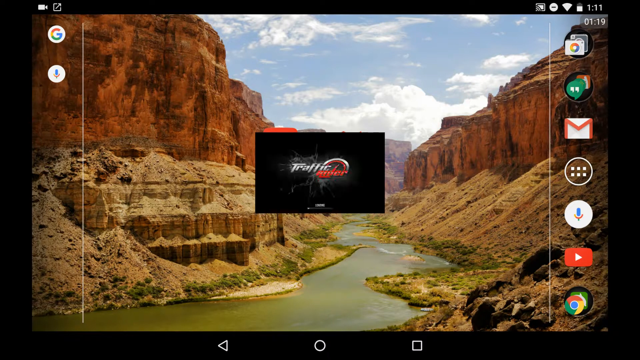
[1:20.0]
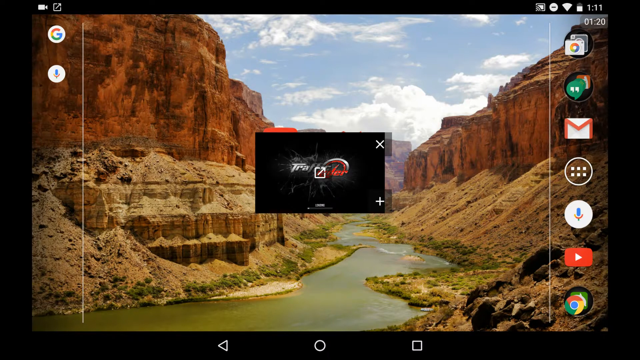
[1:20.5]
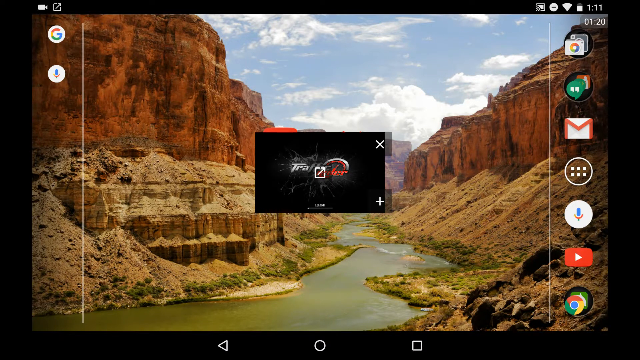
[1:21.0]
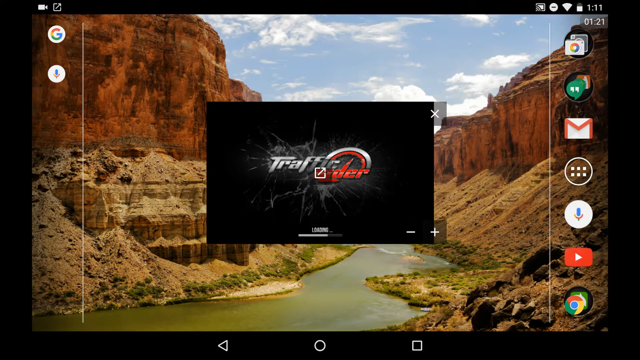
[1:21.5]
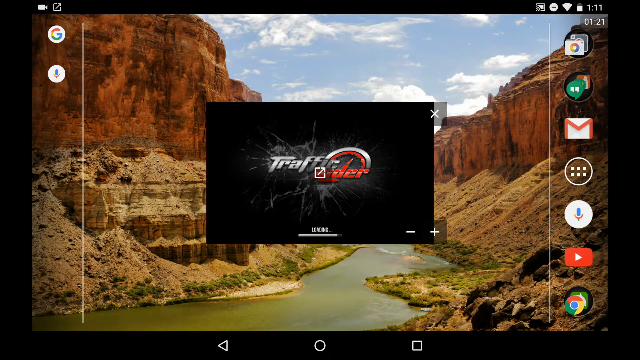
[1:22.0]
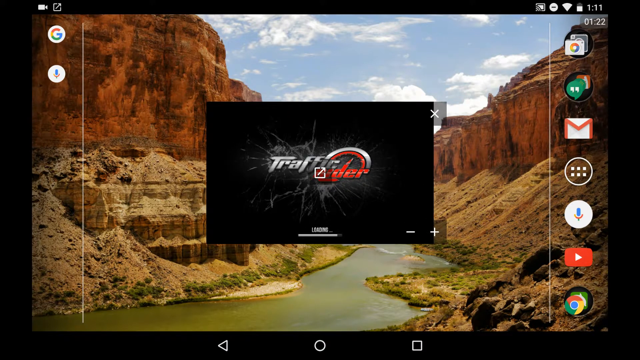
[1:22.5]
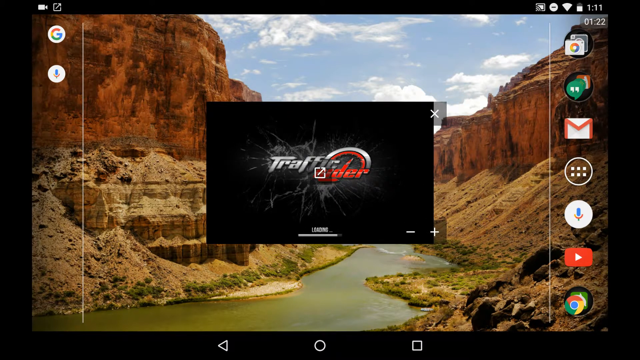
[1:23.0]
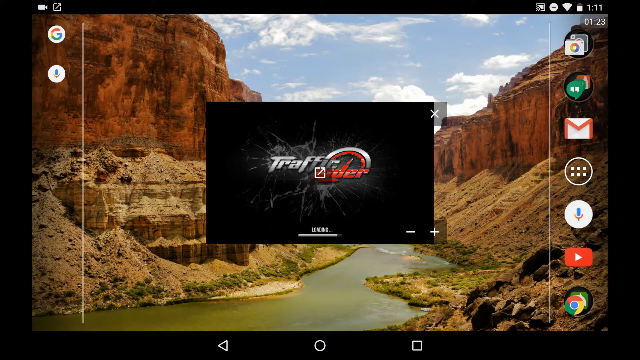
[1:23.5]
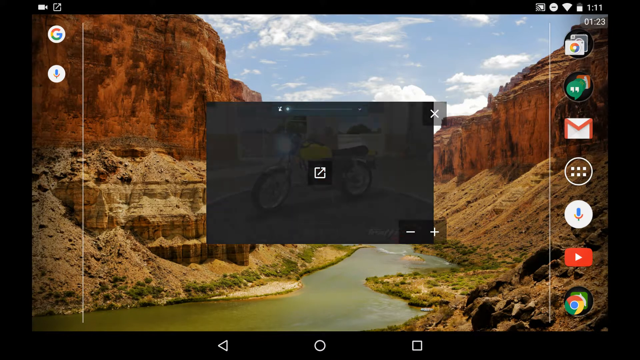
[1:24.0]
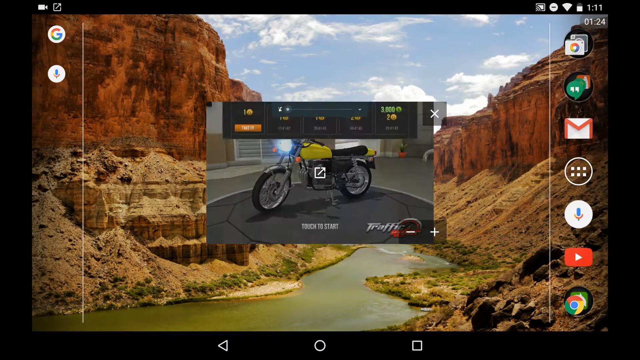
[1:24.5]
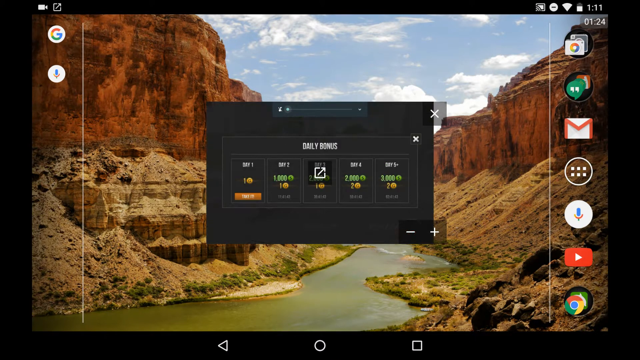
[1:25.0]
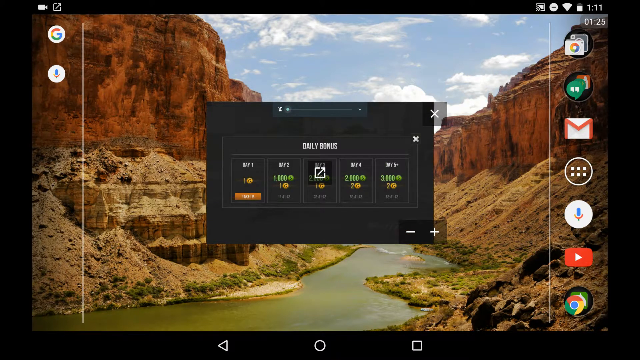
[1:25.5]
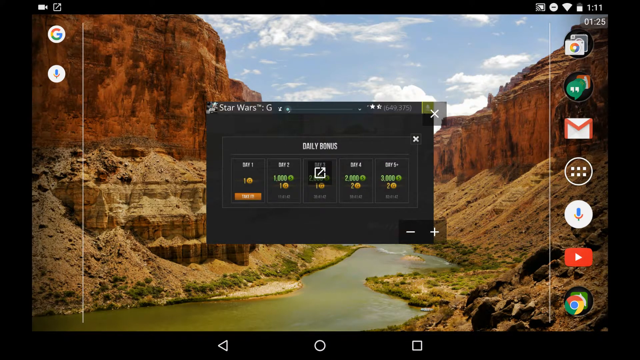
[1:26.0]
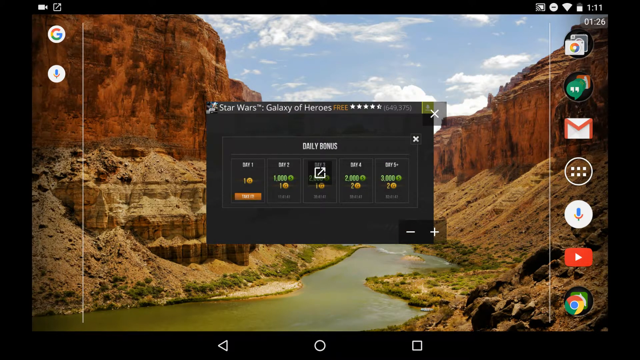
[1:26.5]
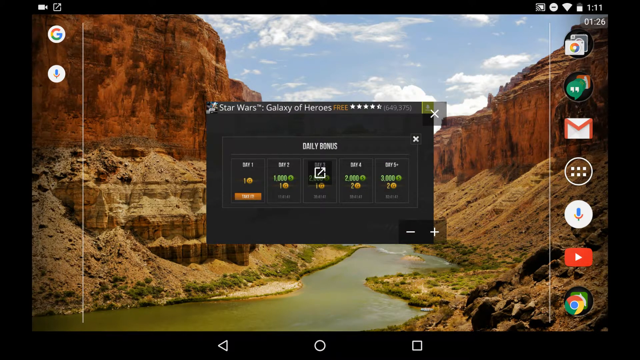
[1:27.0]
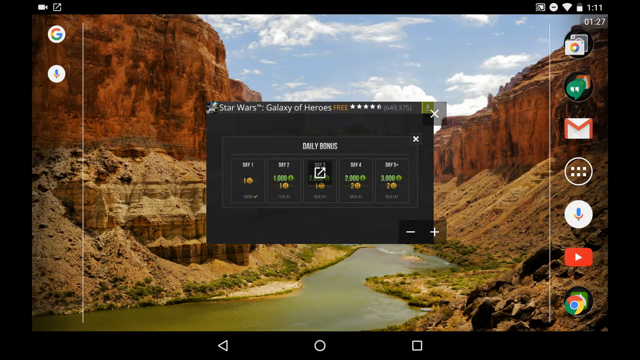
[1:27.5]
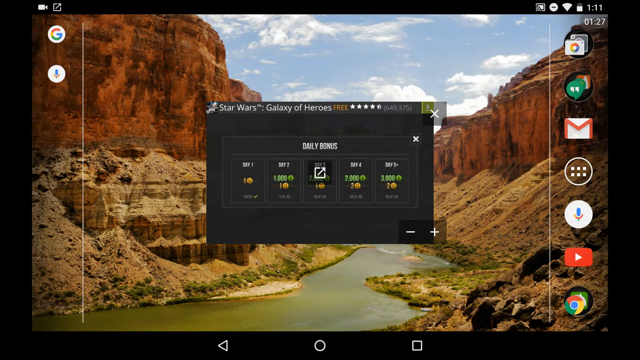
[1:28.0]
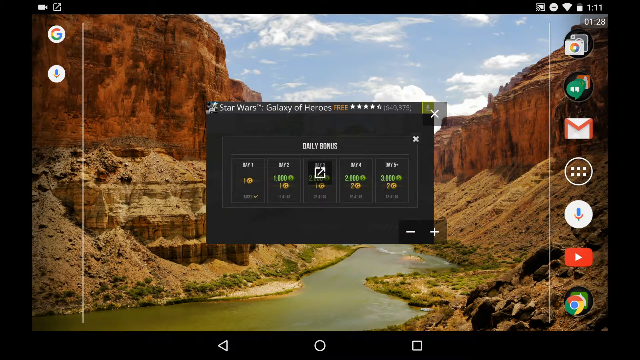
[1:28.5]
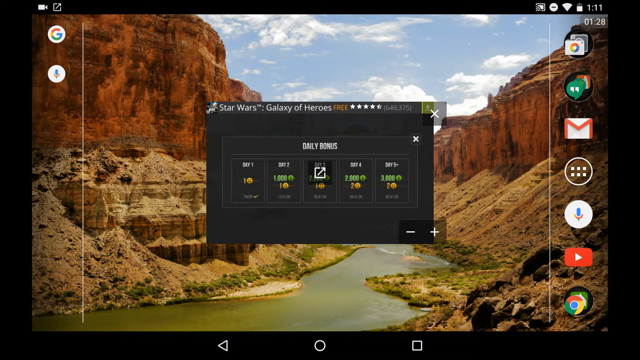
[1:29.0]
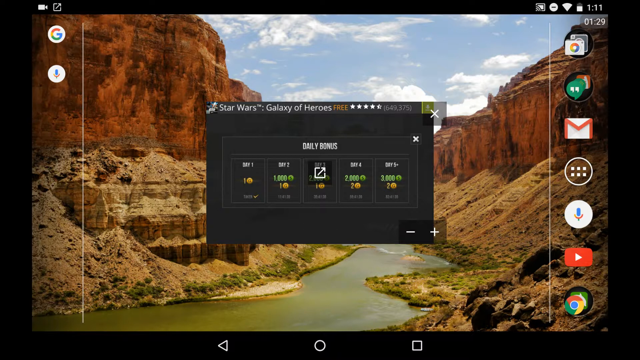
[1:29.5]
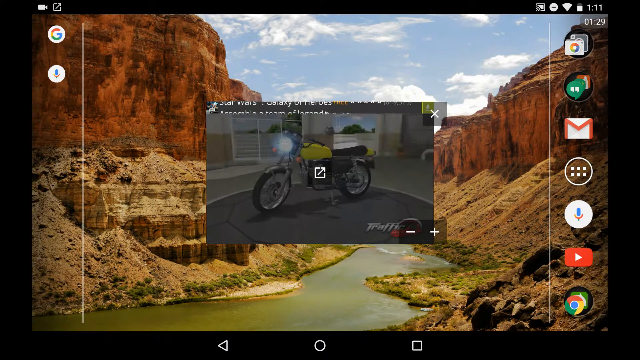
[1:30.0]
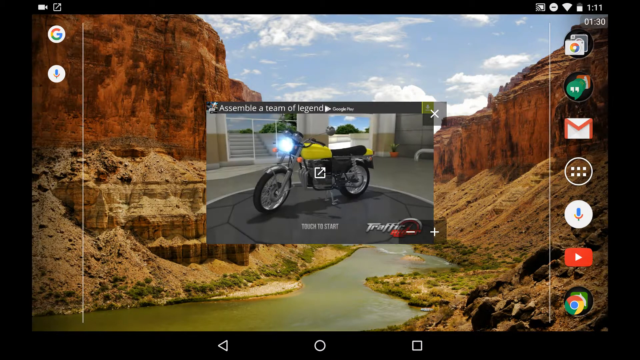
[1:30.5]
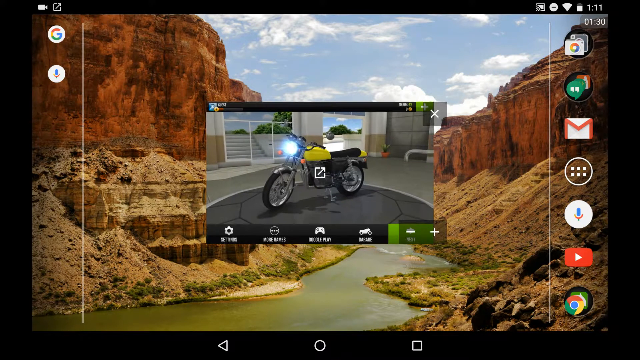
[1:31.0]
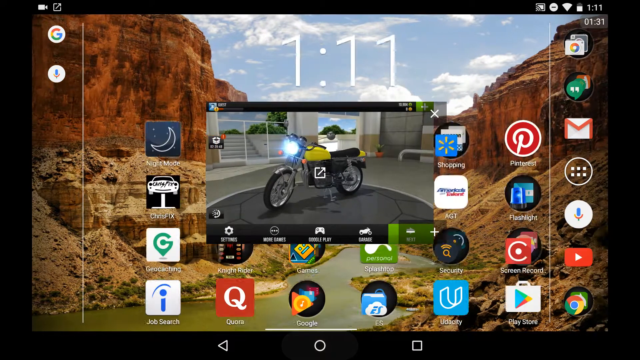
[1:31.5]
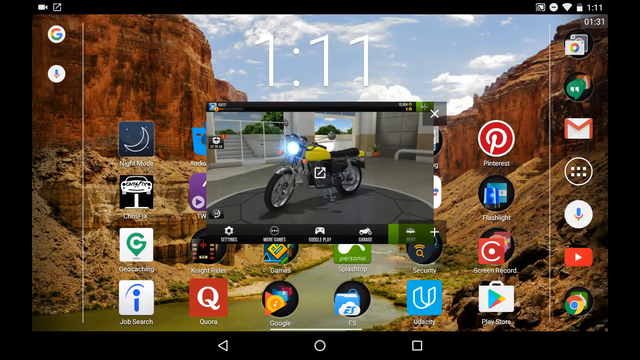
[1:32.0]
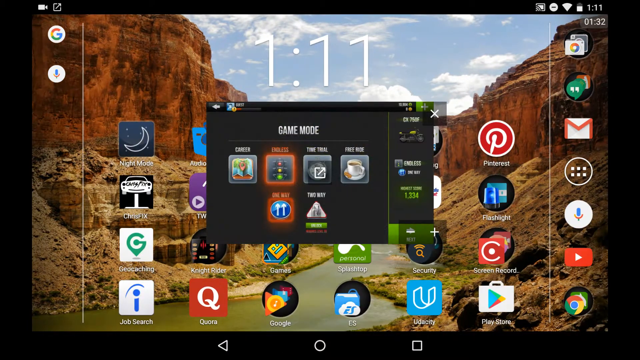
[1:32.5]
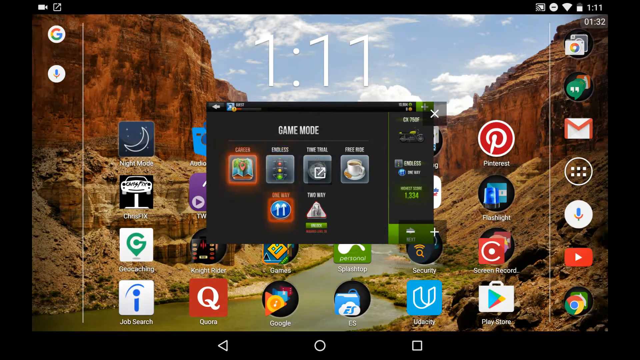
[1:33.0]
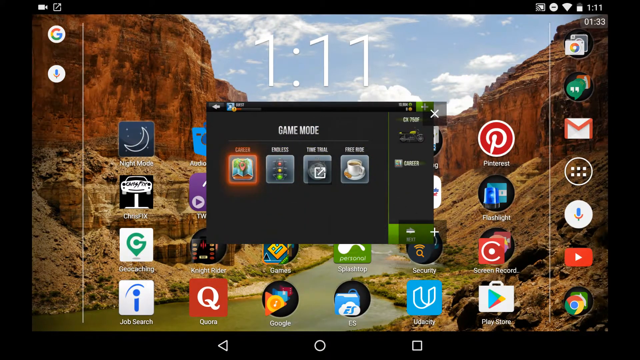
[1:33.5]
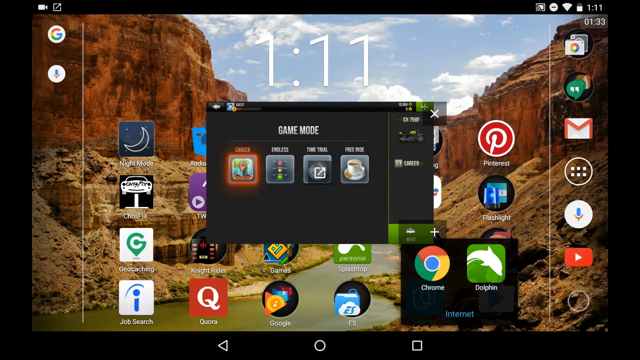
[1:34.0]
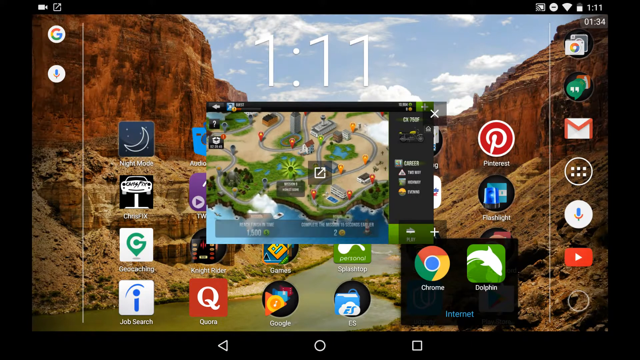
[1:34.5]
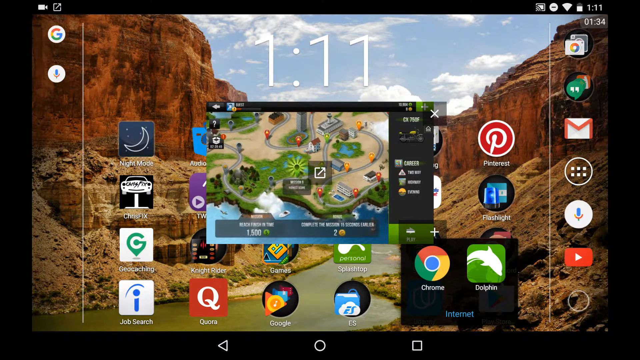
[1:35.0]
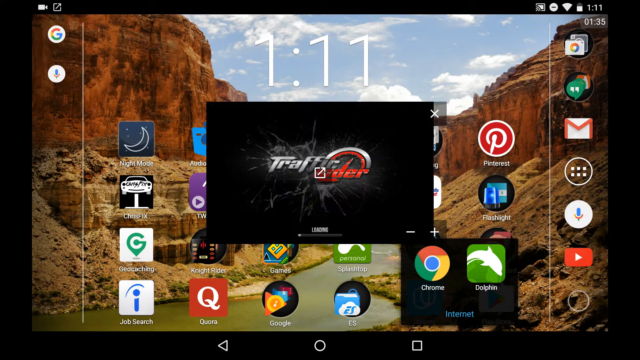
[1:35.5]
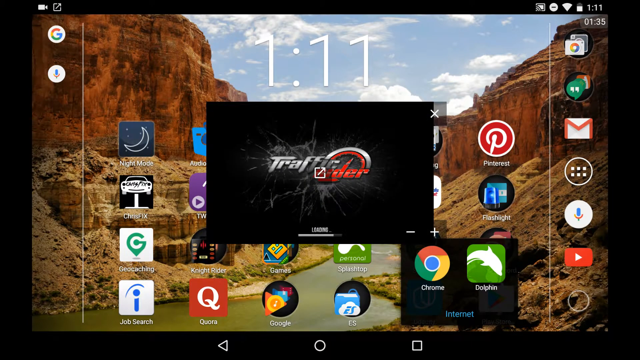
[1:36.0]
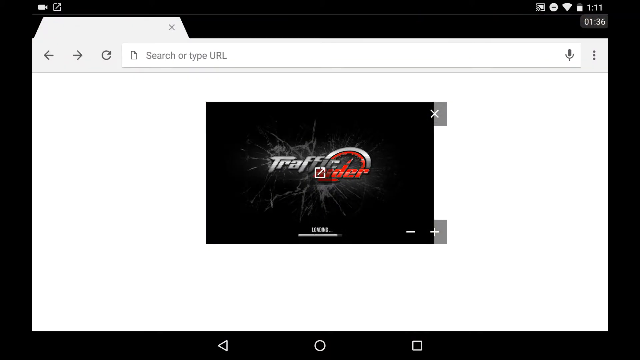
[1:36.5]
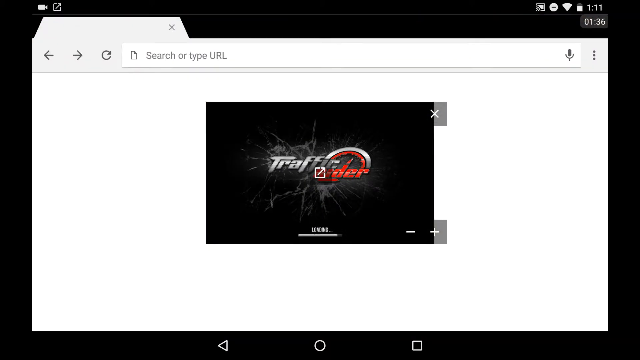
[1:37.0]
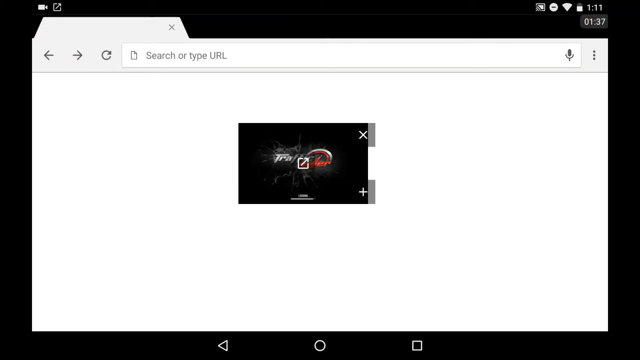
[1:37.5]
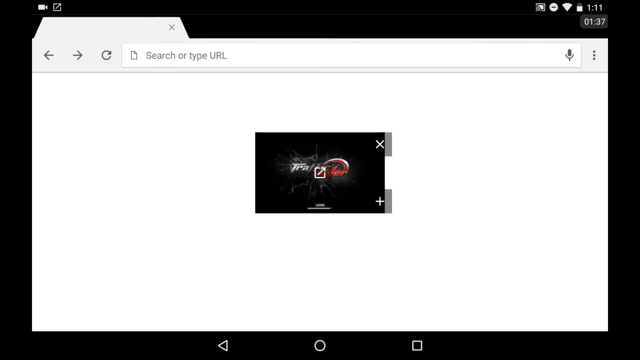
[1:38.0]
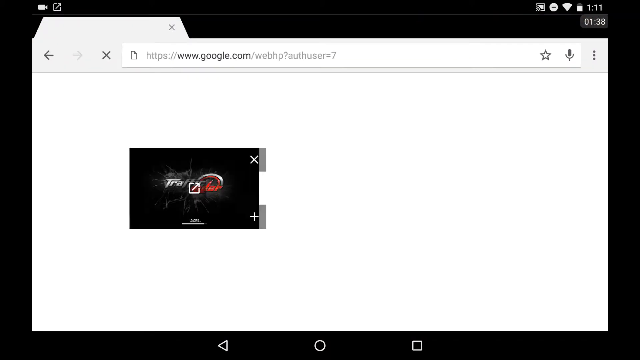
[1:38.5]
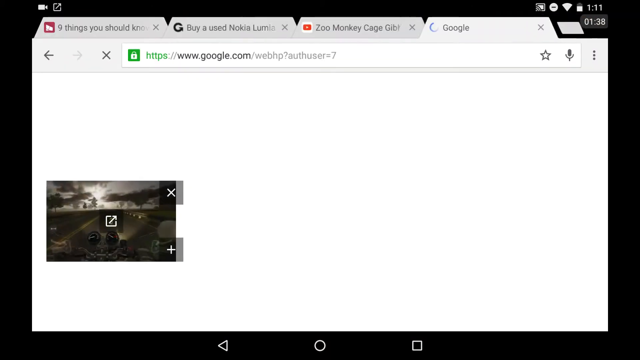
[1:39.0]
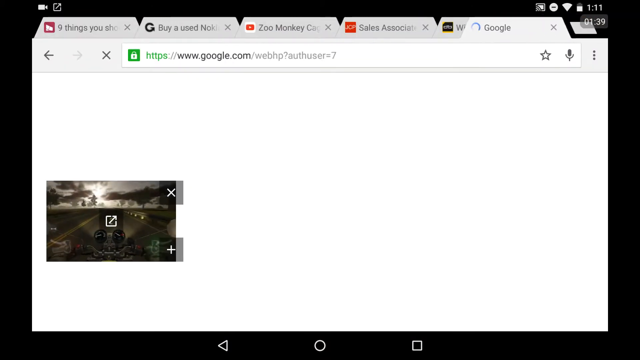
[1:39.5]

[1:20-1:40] The user expands the minimized Traffic Rider thumbnail slightly. When the game loads, a picture of a yellow motorcycle is in the middle of the thumbnail. The thumbnail takes up maybe only 20% of the screen, so the Grand Canyon background is visible behind it. An advertisement for Star Wars Galaxy of Heroes loads first; the user minimizes out of the advertisement, returning to the yellow motorcycle, which is sitting on a platform that slowly spins to its left, showing different angles of the motorcycle. The user then switches to a screen with several app icons and selects one, which opens a web browser with a blank page. The user moves the browser to a new tab and minimizes the browser window, returning to the desktop home screen with the Traffic Rider app minimized in the center of the screen.